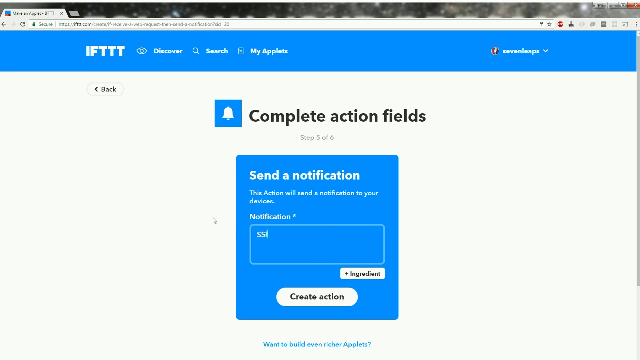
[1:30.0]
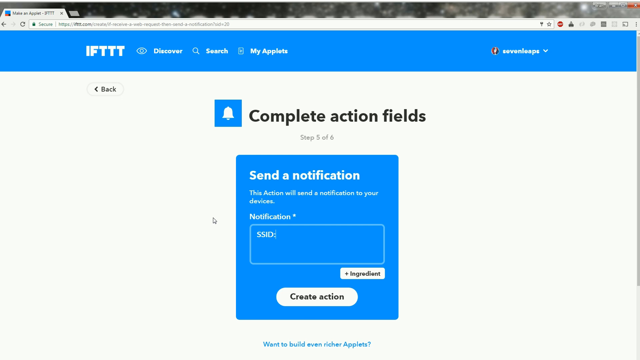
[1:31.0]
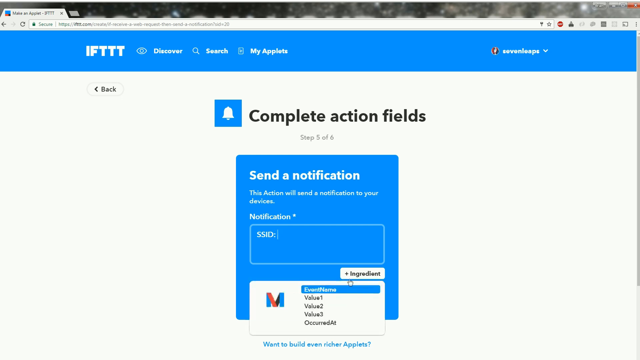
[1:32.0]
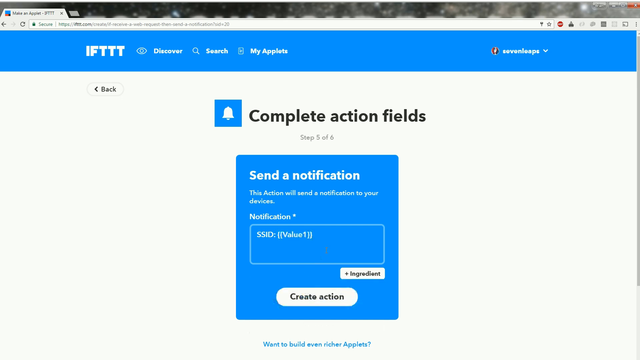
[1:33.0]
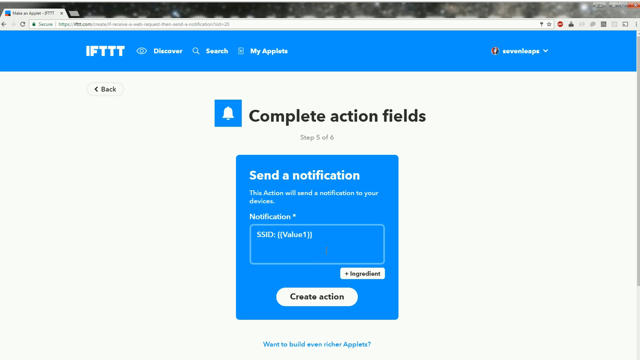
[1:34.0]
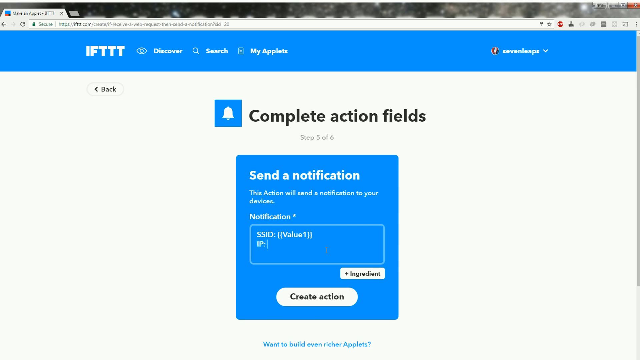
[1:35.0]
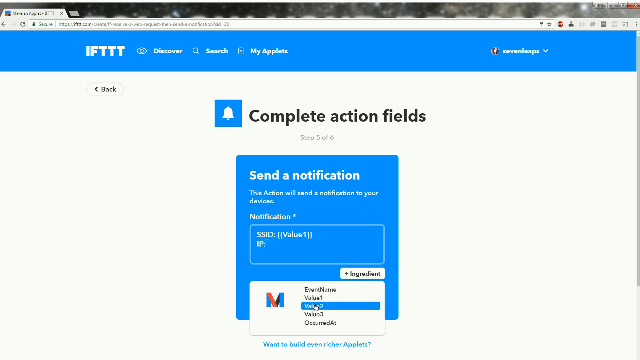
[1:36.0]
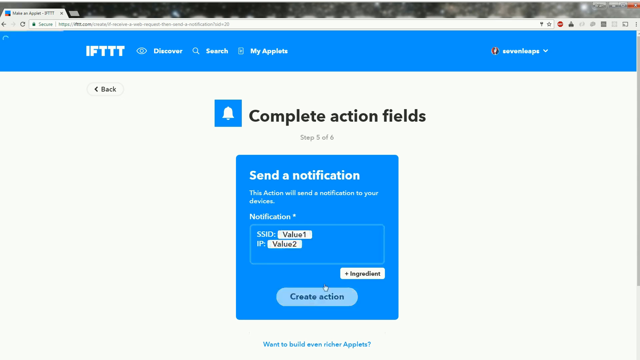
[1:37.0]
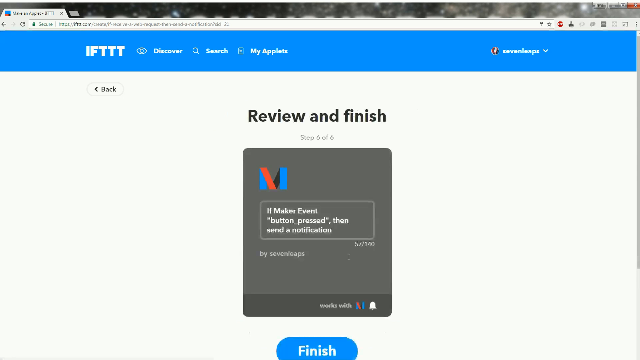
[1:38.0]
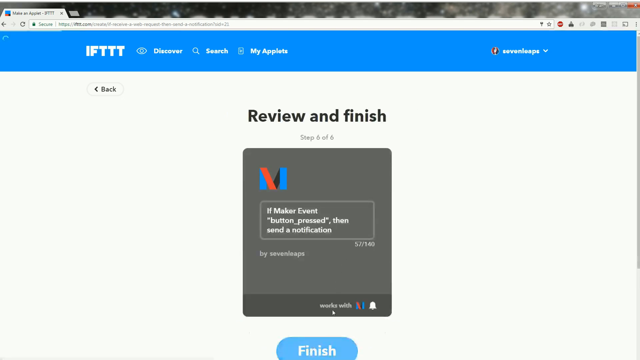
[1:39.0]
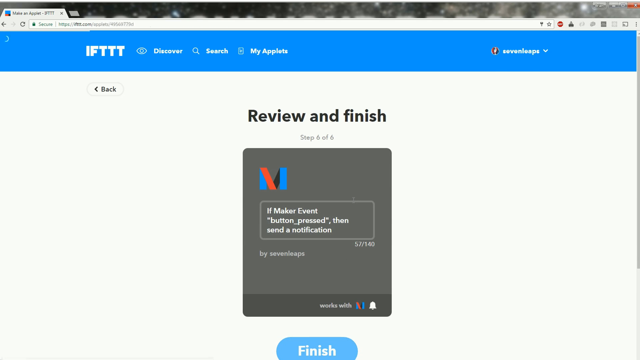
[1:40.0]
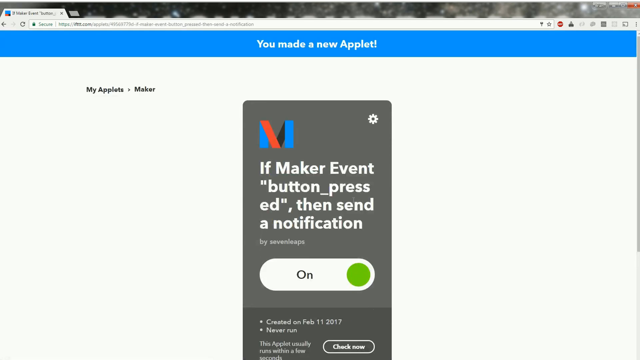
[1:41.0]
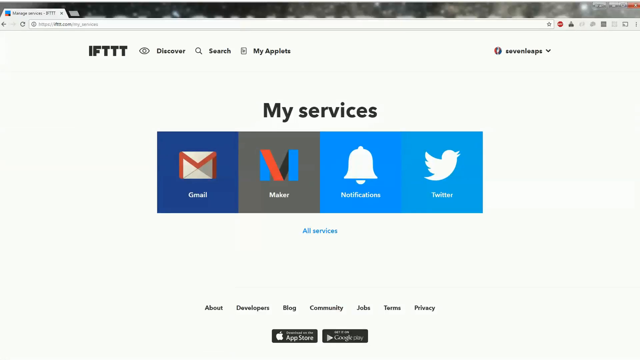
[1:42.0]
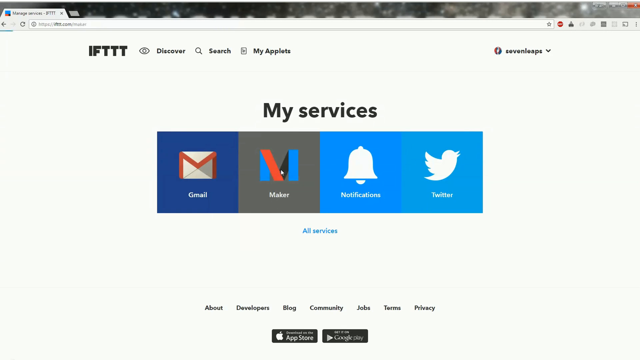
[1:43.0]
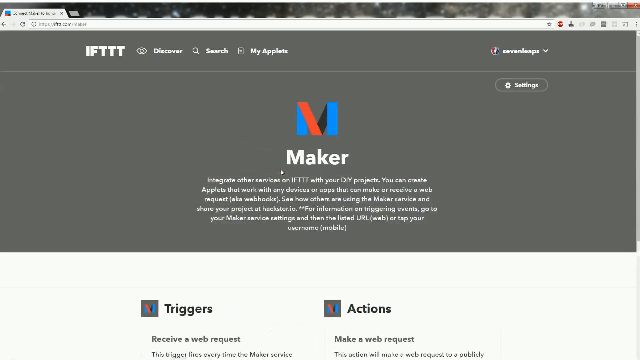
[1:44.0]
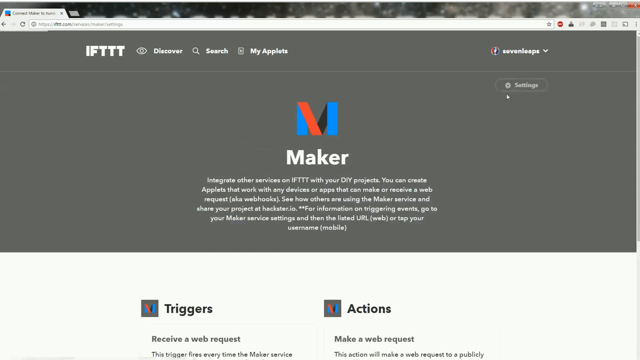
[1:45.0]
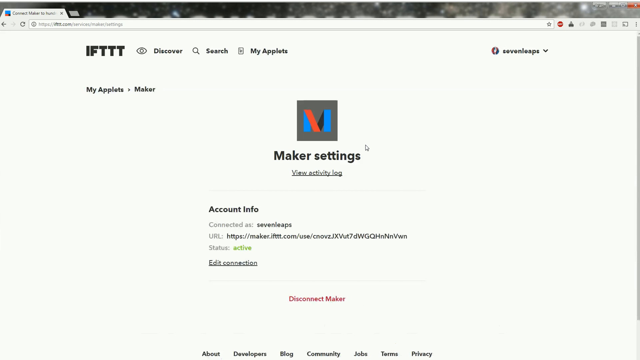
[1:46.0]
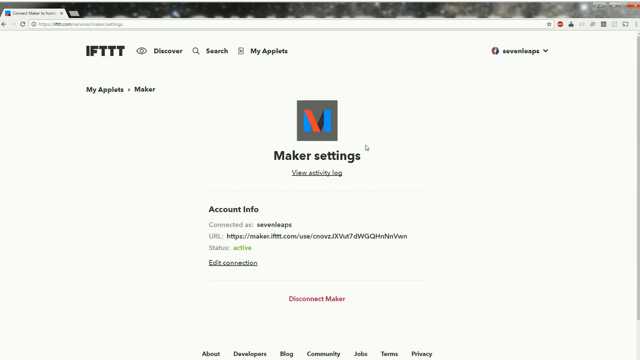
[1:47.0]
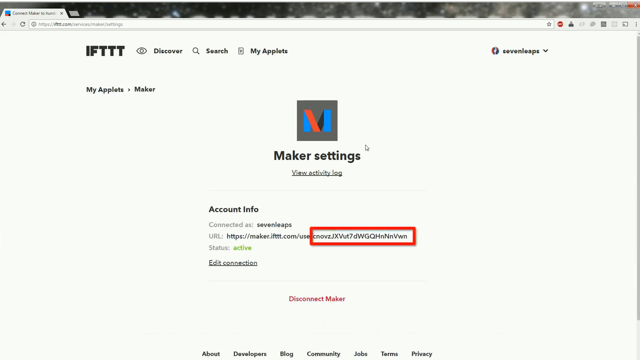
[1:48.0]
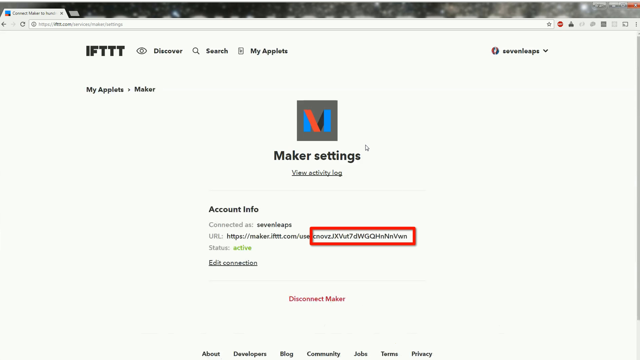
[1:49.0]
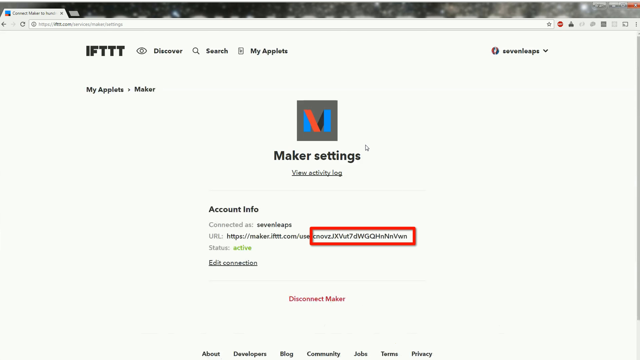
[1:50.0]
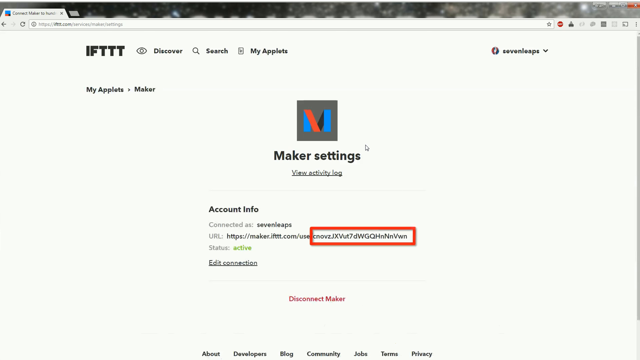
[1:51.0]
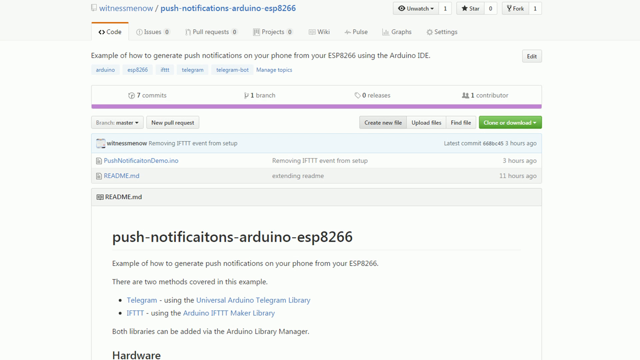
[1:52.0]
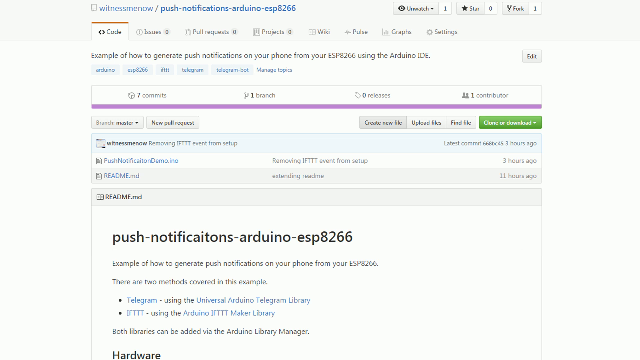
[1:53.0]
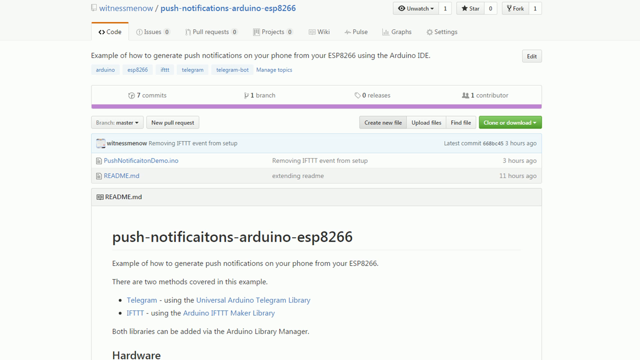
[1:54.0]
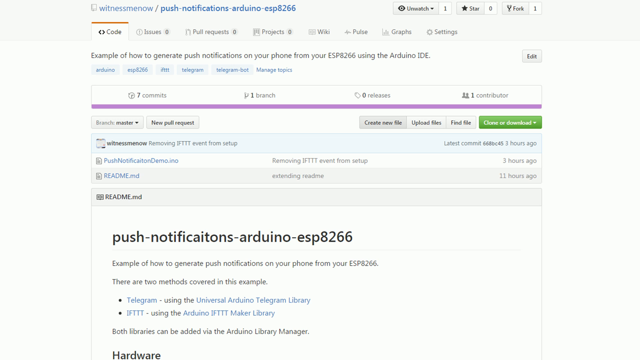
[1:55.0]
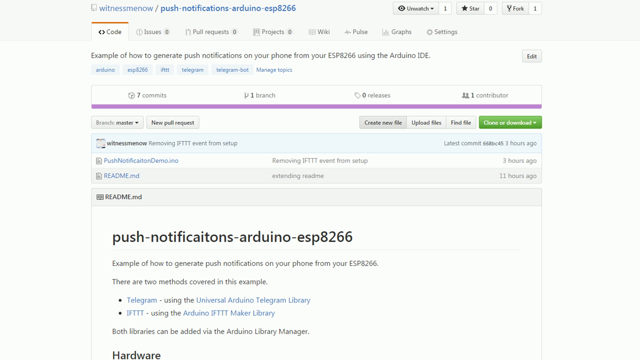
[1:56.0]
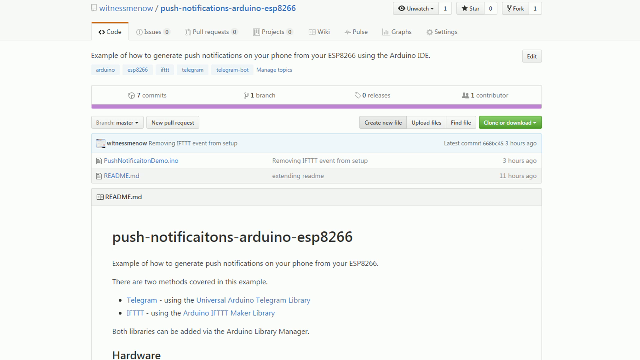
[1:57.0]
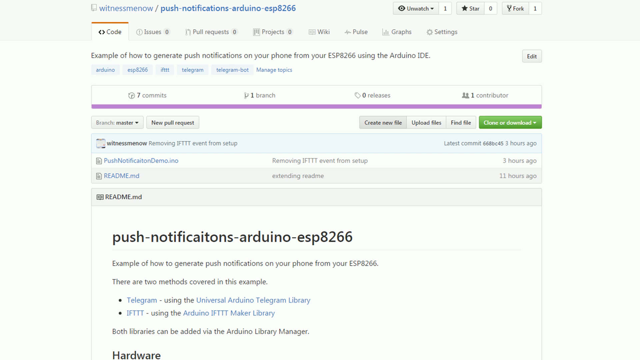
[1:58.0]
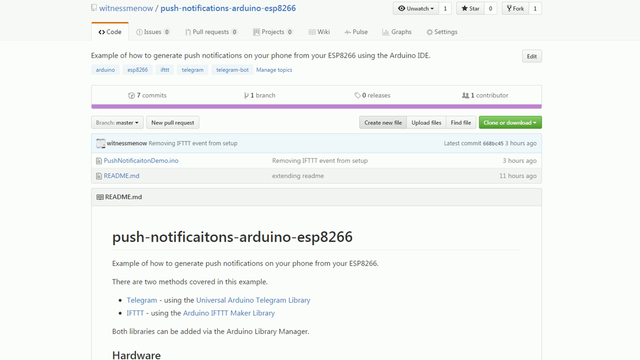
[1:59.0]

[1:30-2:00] On the IFTTT website, the user is completing a send notification action. He types "SSID" into a notification field, and there is another option for inserting certain values, where he puts in value one. He then types "IP." There is also an option that appears to say "ingredient," where he puts in value 2. He enters all this information in the maker app and then apparently clicks finish. Back on the IFTTT website, he now has several tabs: Gmail, maker, notification and Twitter. He goes to the settings of the maker tab, which leads to a maker settings screen, and highlights the URL shown there without doing anything else with it. It then seems to go to a URL for a push notification.